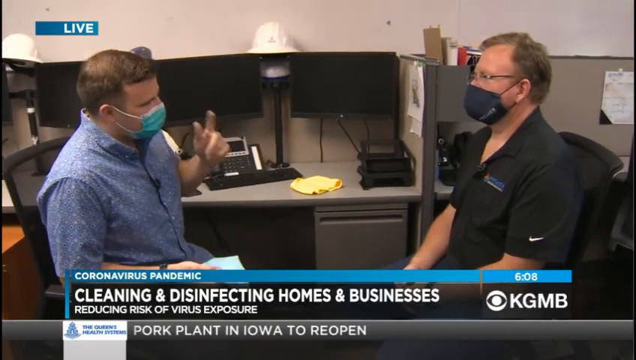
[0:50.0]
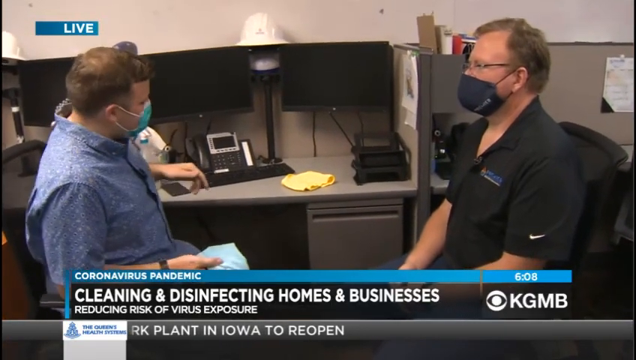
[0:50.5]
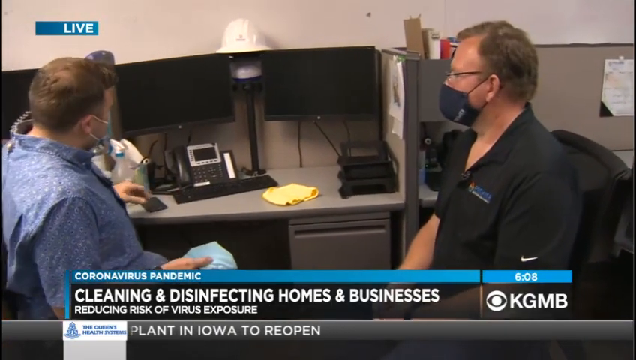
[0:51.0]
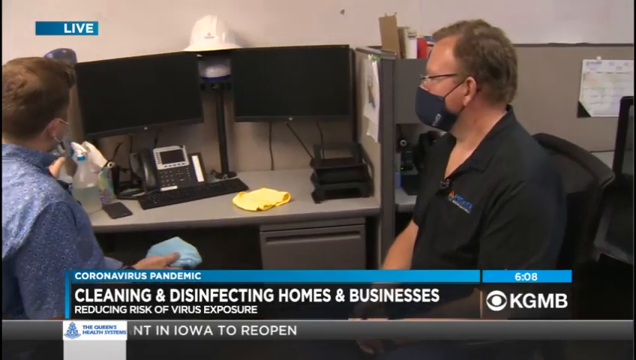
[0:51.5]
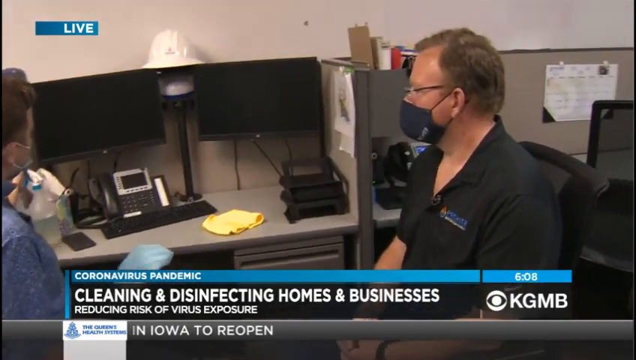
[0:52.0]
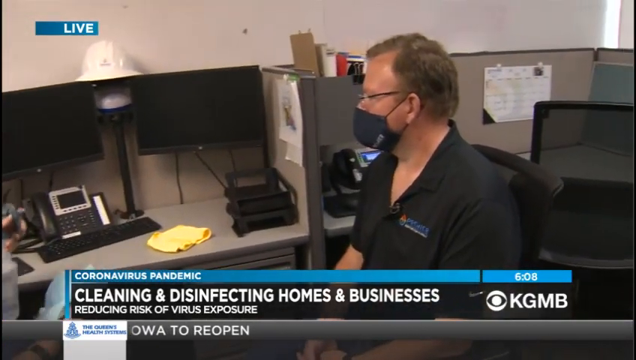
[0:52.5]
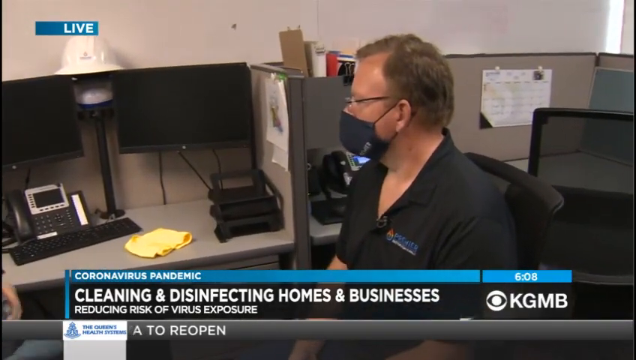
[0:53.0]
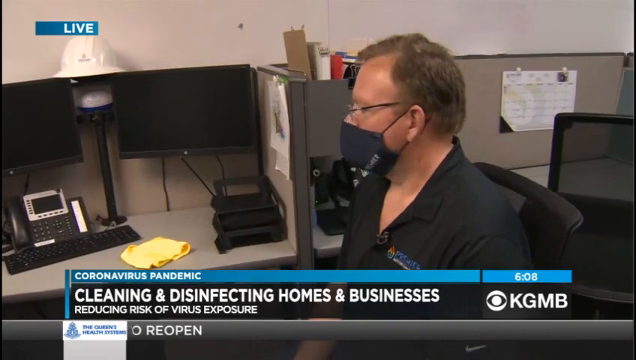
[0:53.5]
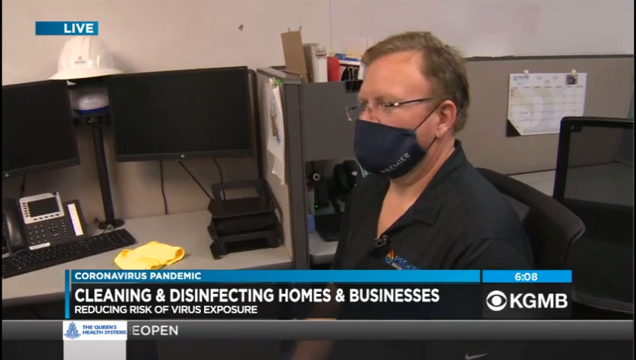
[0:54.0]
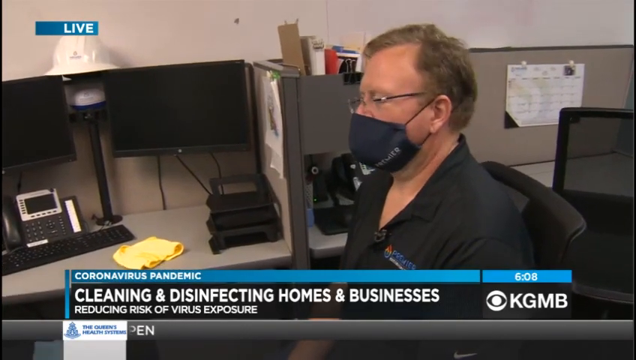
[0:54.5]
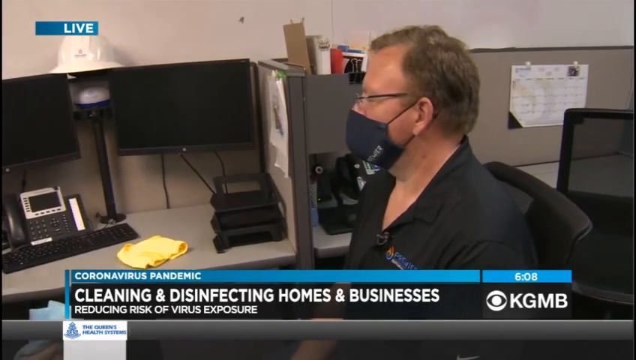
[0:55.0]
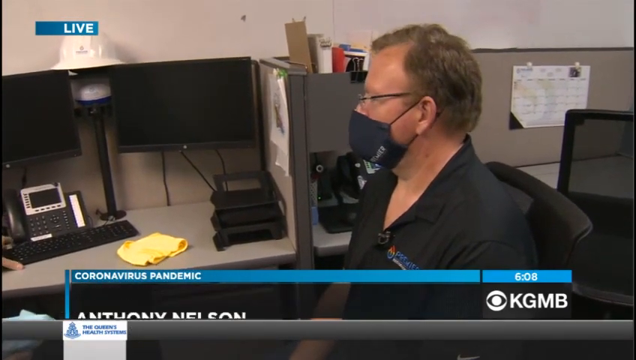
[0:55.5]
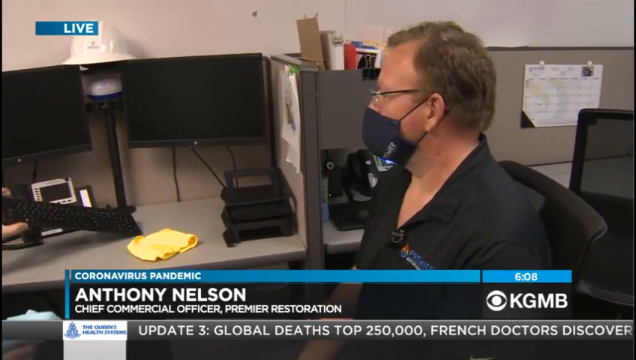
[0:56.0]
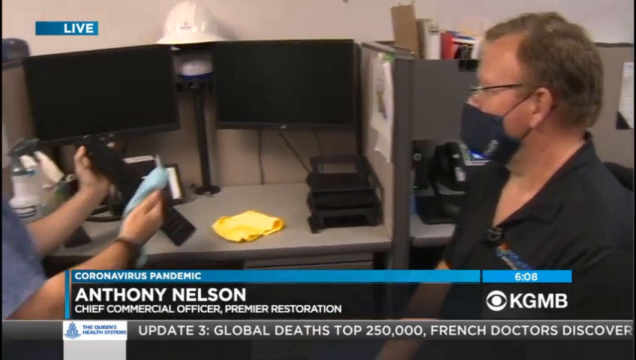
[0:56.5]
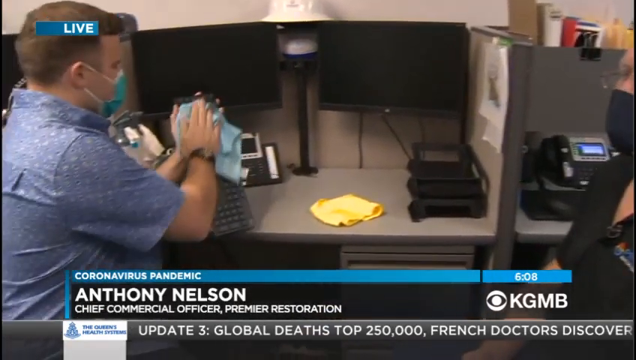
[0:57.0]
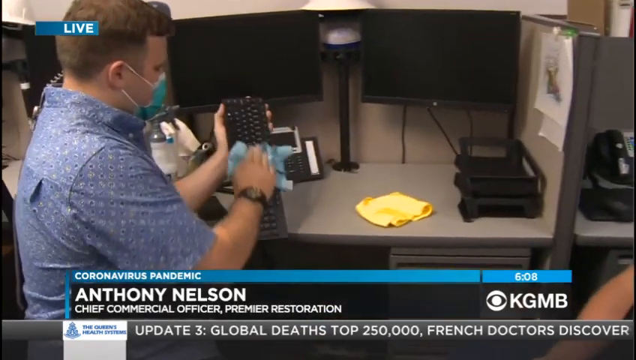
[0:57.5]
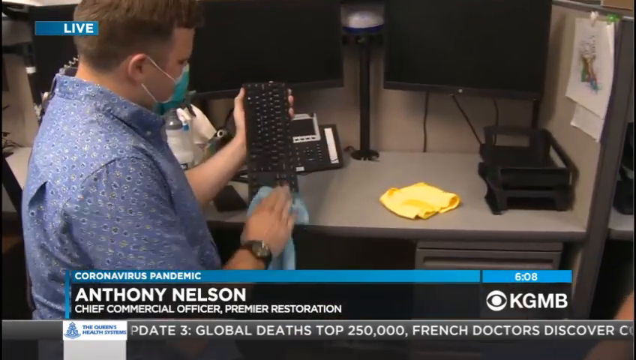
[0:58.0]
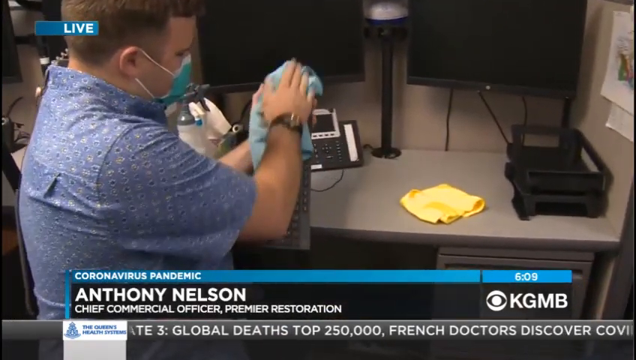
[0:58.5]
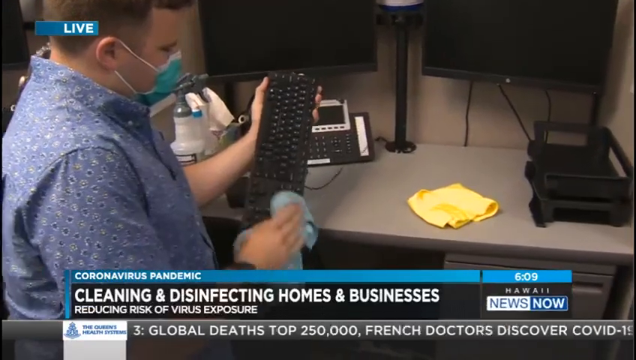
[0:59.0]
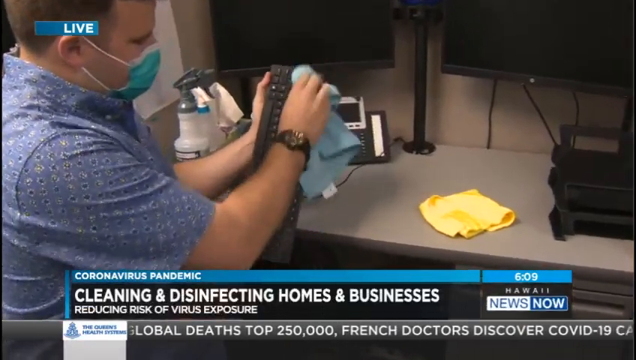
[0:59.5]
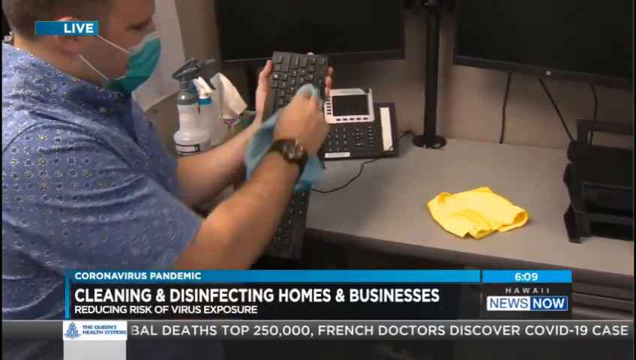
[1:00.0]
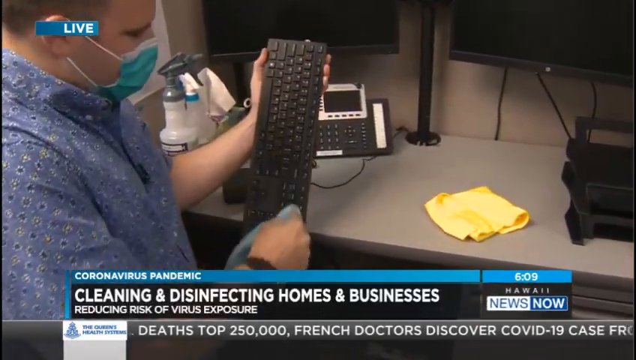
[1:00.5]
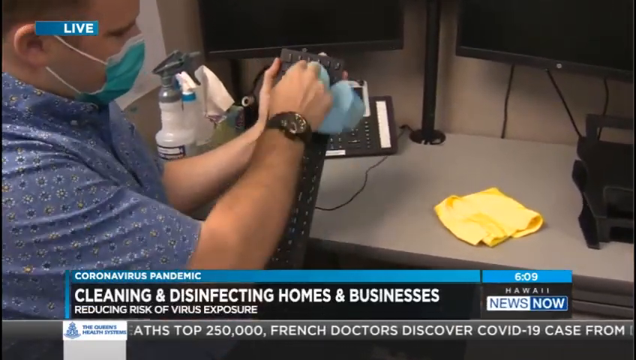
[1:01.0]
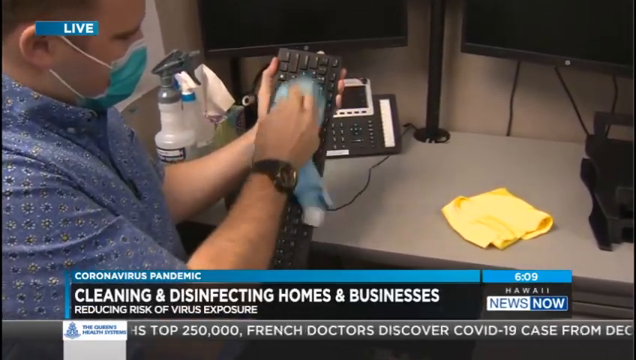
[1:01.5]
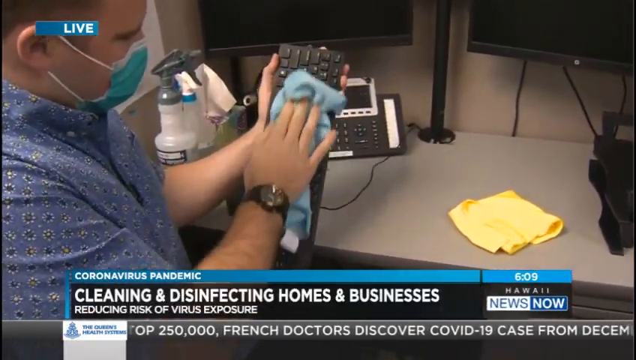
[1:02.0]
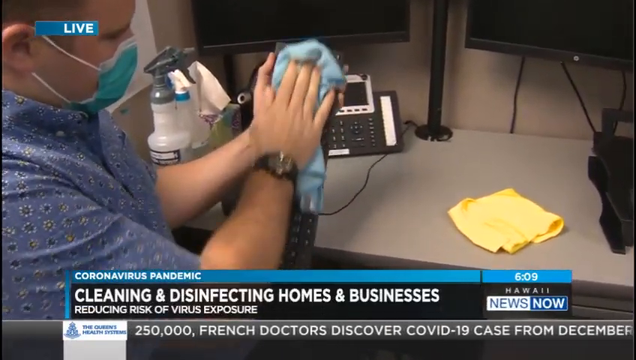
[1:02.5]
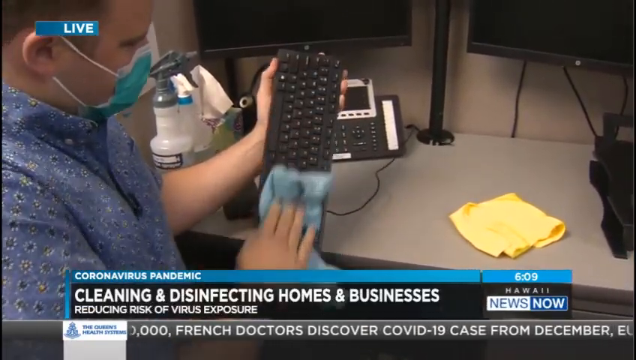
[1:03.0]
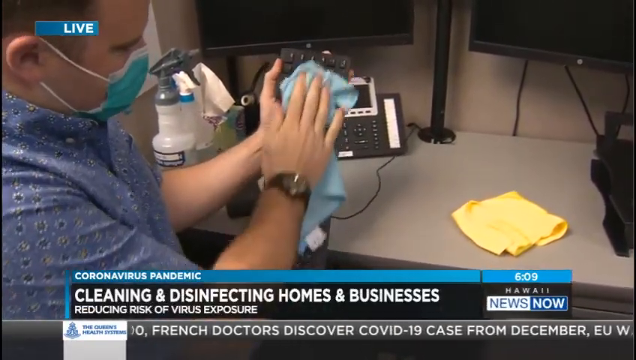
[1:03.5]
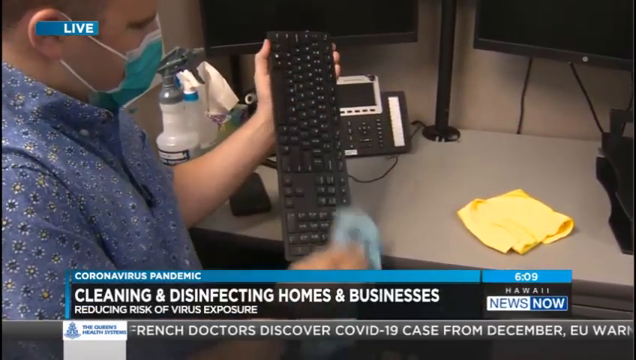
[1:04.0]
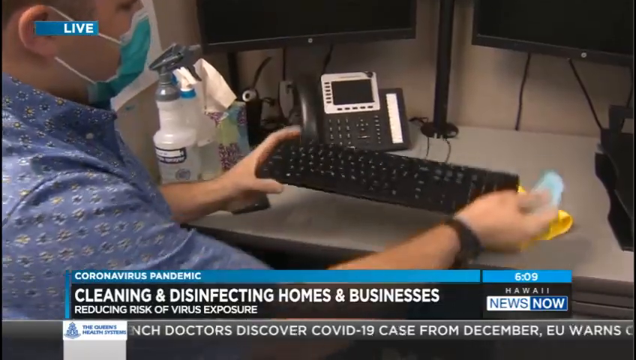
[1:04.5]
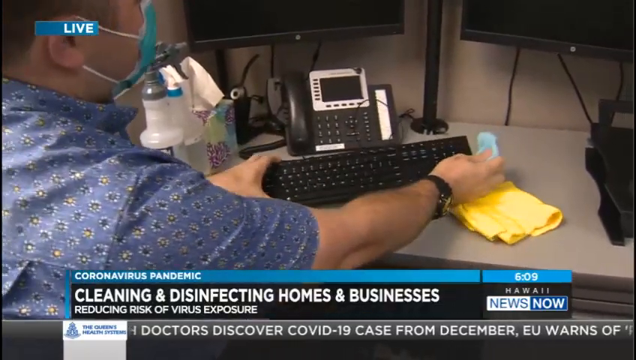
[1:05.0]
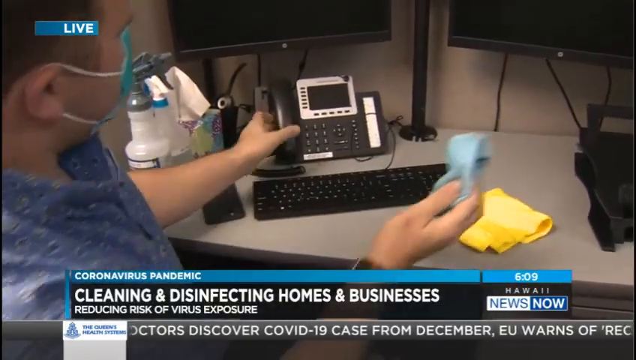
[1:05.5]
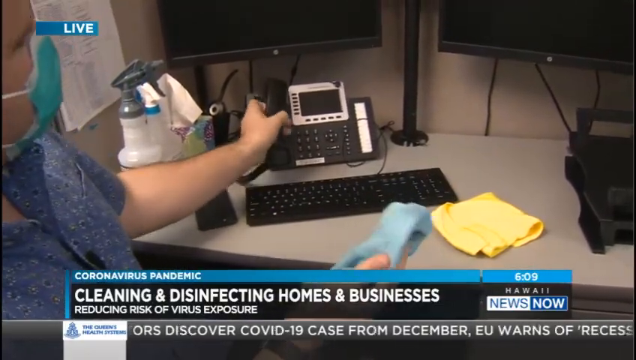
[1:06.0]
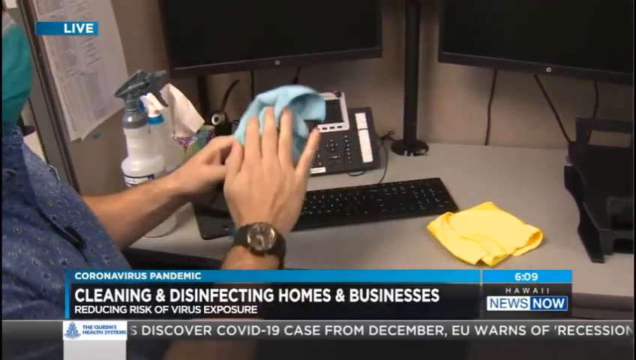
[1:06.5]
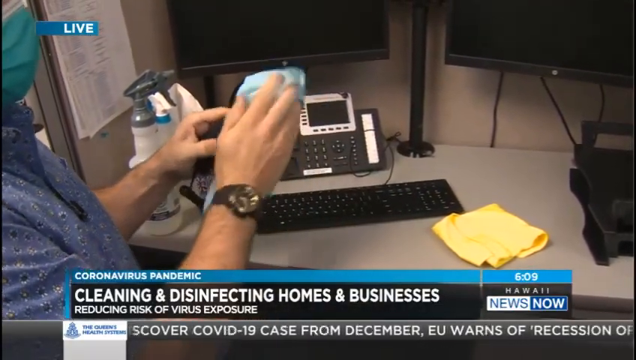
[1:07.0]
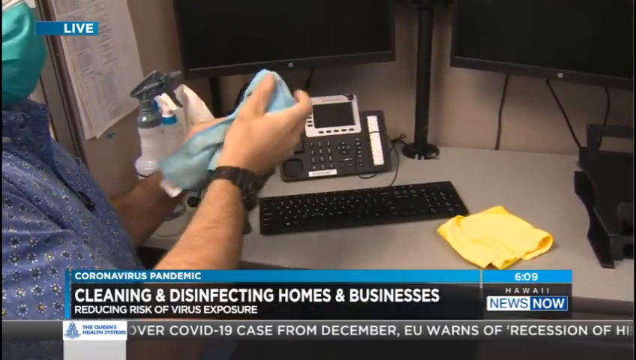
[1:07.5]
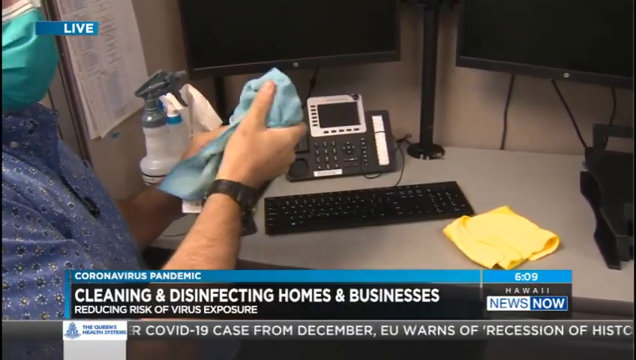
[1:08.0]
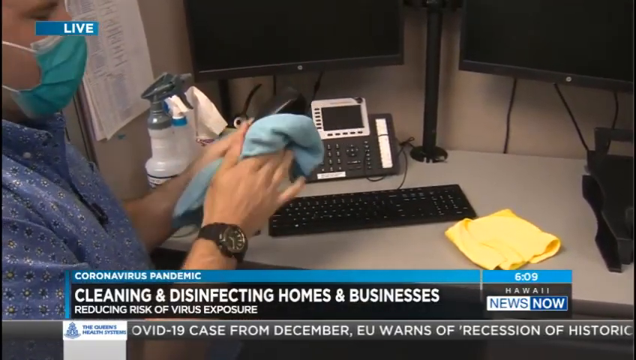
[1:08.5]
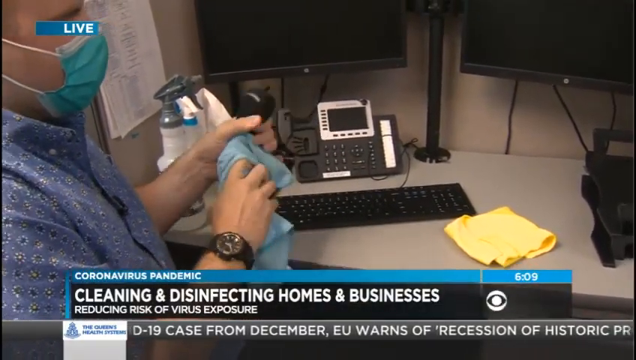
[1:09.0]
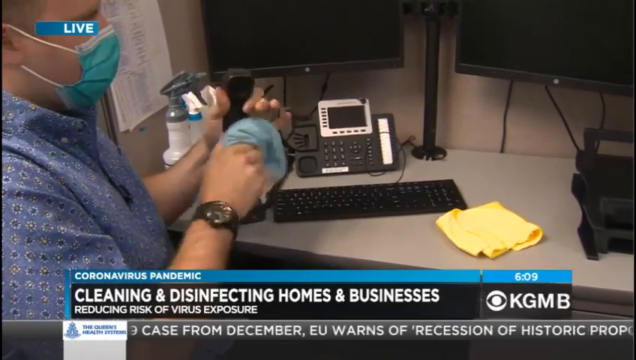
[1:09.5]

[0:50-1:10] Both men are shown in the indoor setting, both wearing face masks. There are several desks, with objects on top including a telephone, a keyboard, computer monitors and a yellow towel. In the lower left corner, a title for the man on the right reads "Anthony Nelson, Chief Commercial Officer, Premier Restoration". The man on the left takes a white towel and wipes a keyboard up and down, then wipes a phone. News updates along the bottom center read "pork plant in Iowa to reopen", "update three", "global deaths top 250,000", "French doctors discover COVID-19 case from December" and "EU warns of recession of historic". The rectangular video is filmed indoors with plenty of artificial light, keeping everything clear and visible.